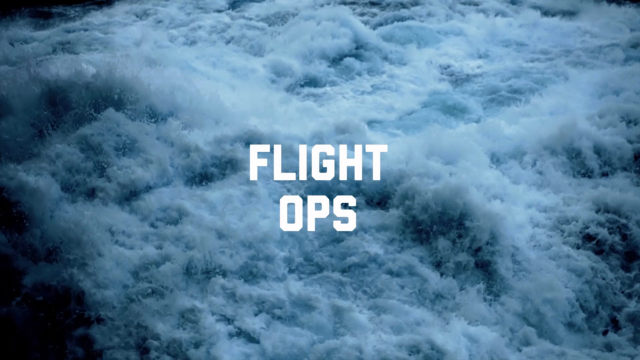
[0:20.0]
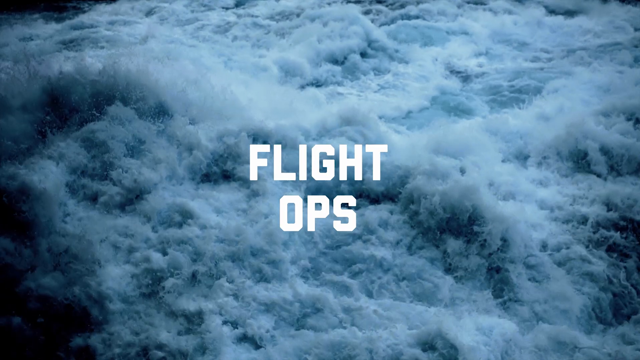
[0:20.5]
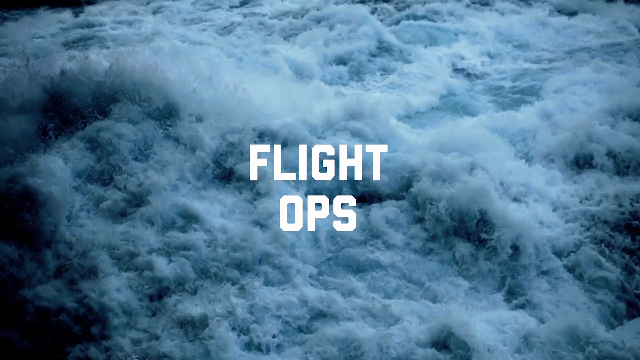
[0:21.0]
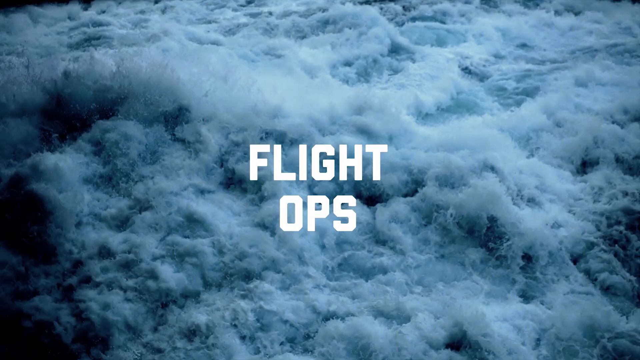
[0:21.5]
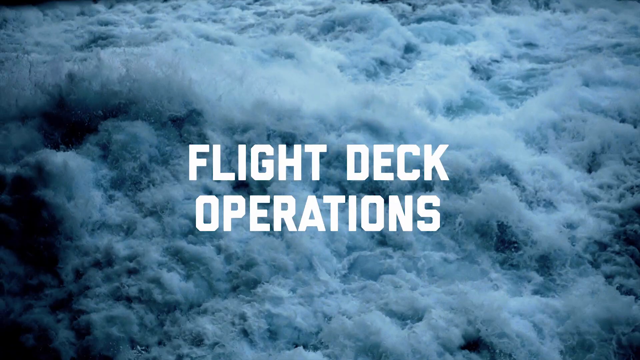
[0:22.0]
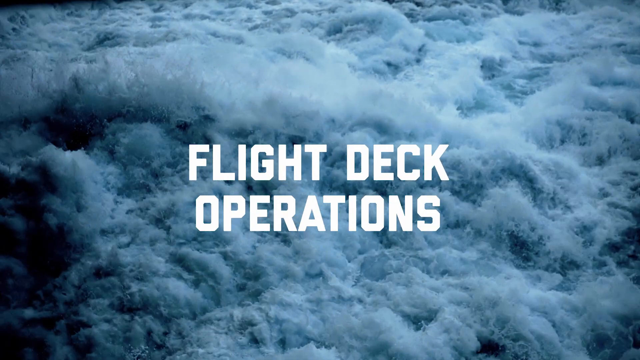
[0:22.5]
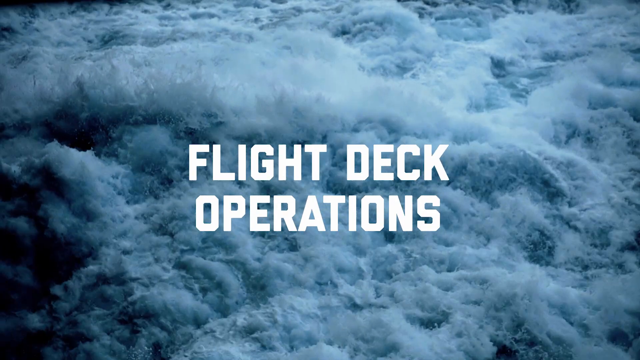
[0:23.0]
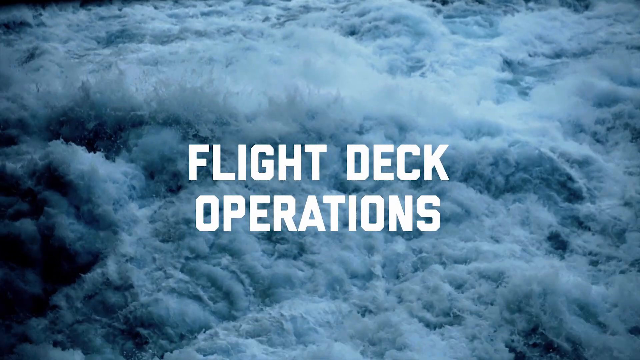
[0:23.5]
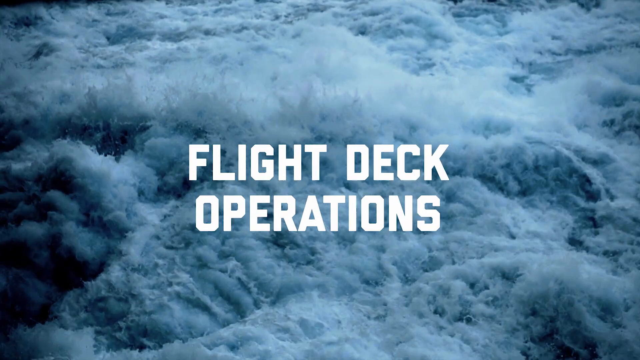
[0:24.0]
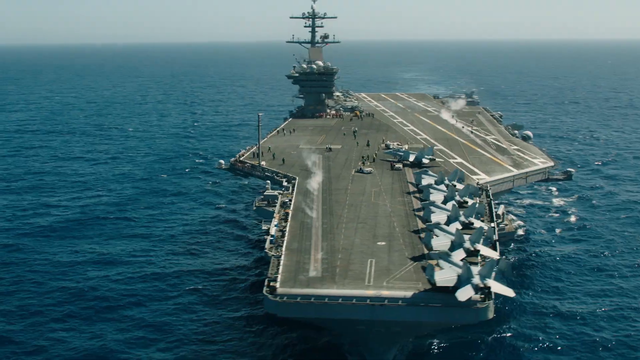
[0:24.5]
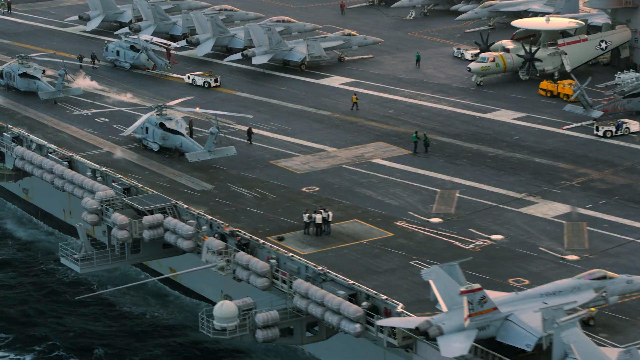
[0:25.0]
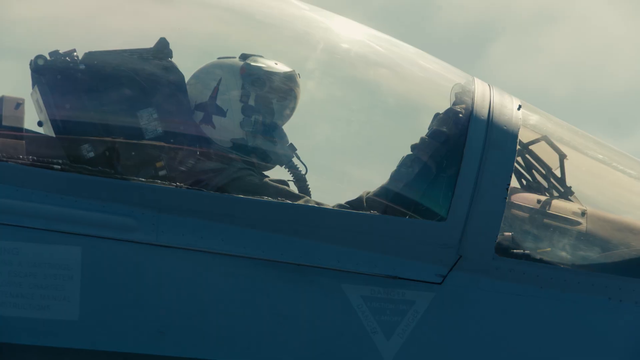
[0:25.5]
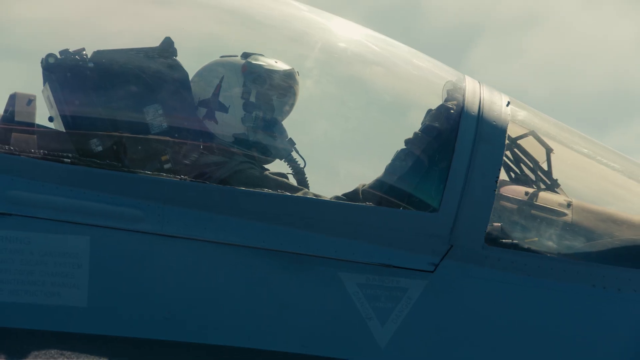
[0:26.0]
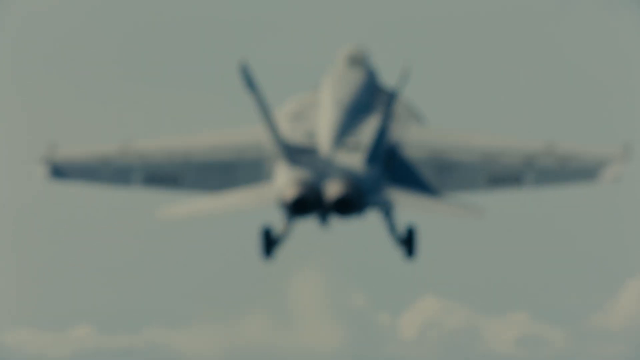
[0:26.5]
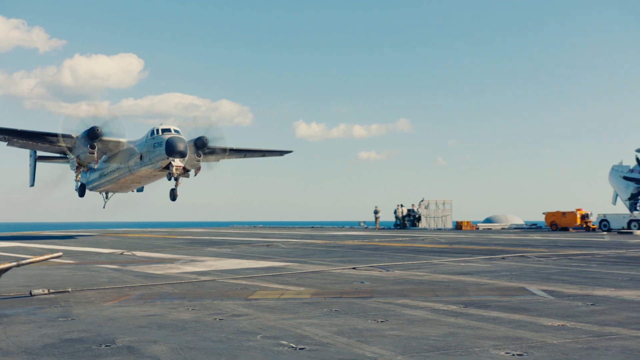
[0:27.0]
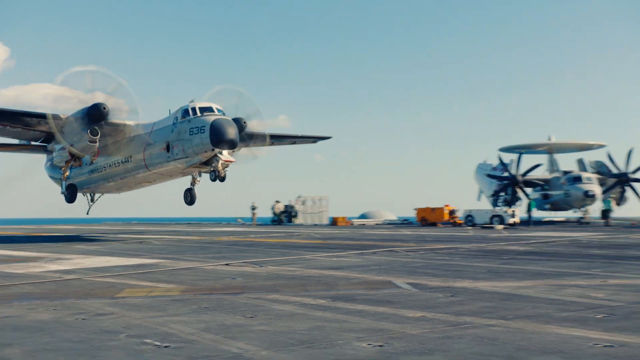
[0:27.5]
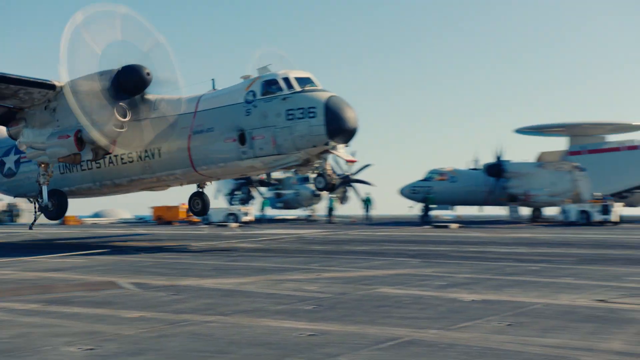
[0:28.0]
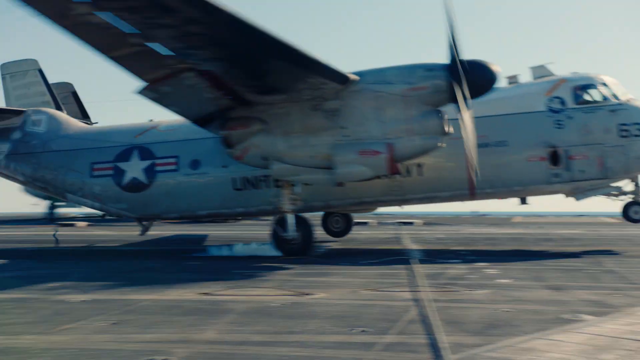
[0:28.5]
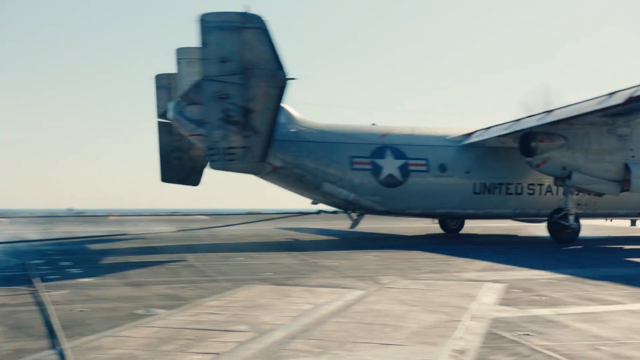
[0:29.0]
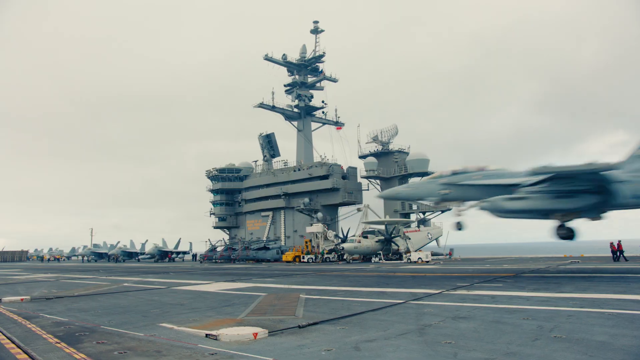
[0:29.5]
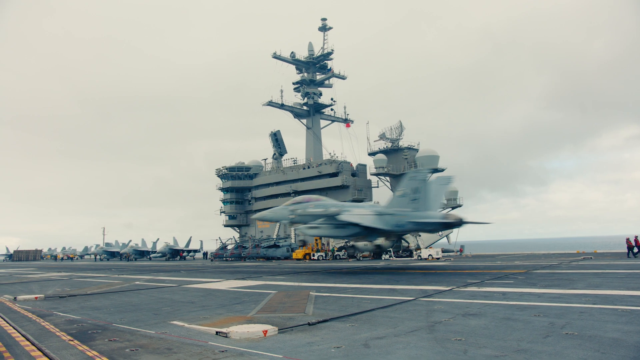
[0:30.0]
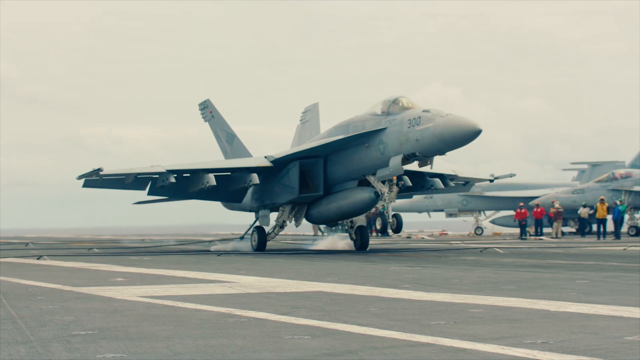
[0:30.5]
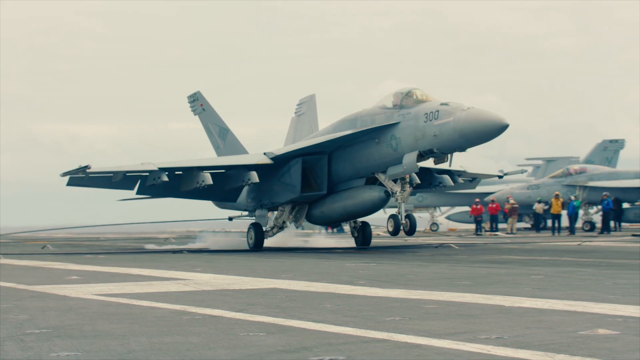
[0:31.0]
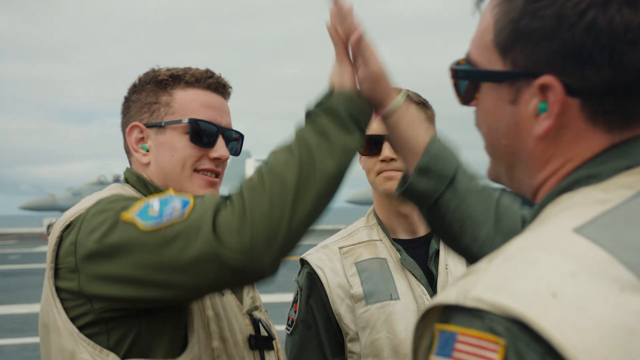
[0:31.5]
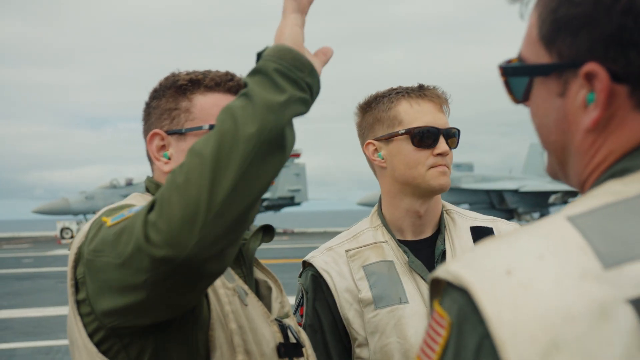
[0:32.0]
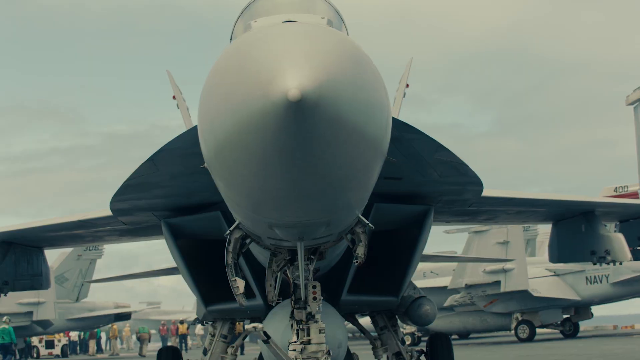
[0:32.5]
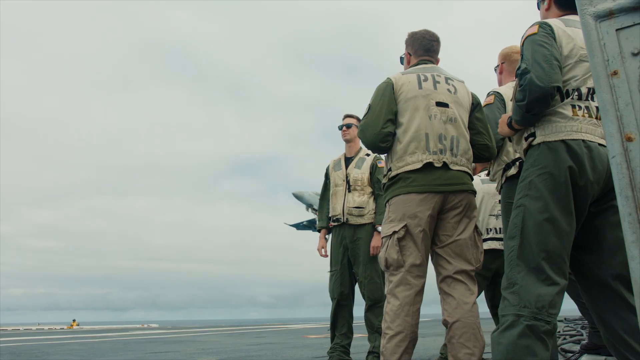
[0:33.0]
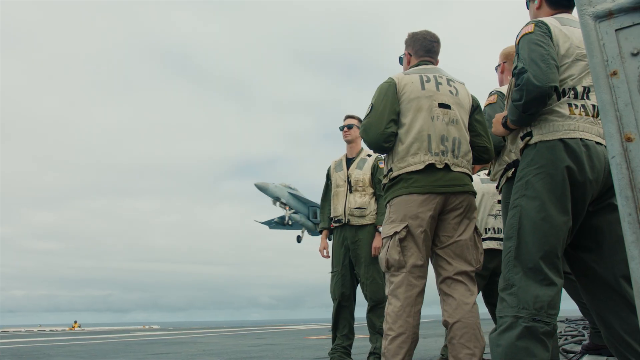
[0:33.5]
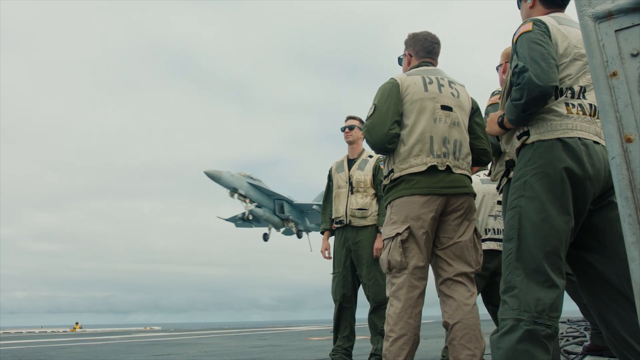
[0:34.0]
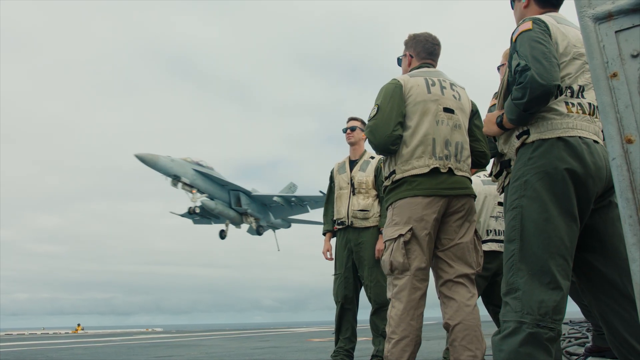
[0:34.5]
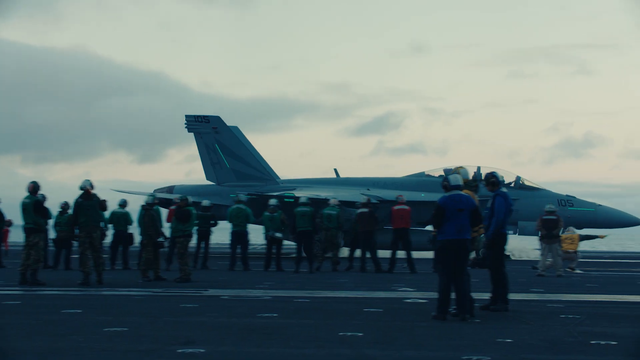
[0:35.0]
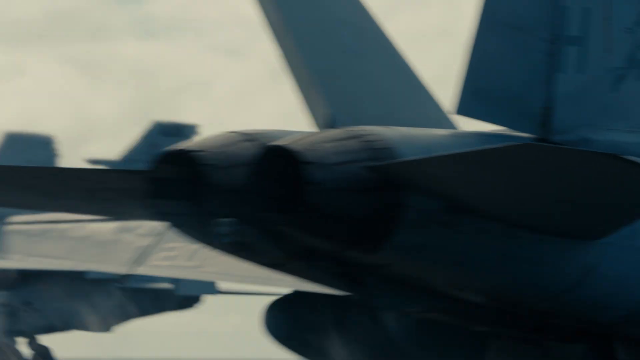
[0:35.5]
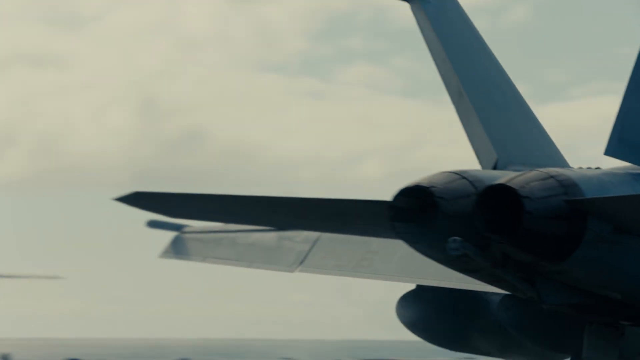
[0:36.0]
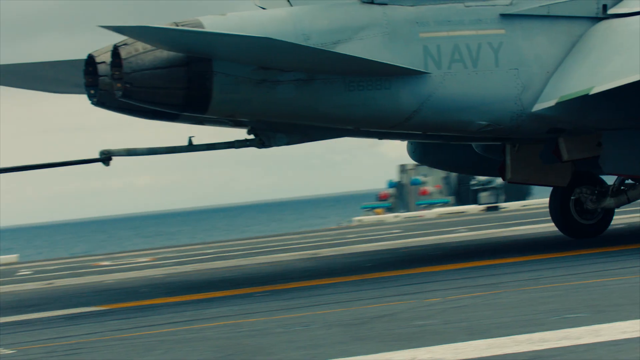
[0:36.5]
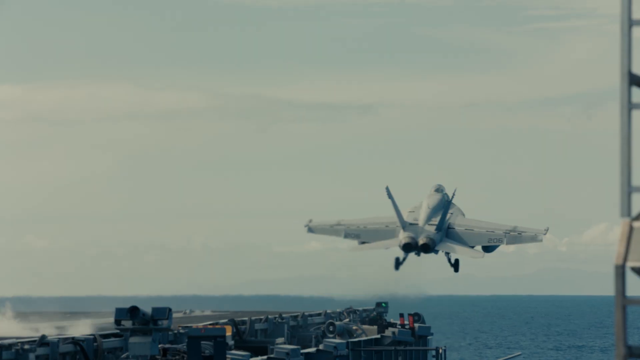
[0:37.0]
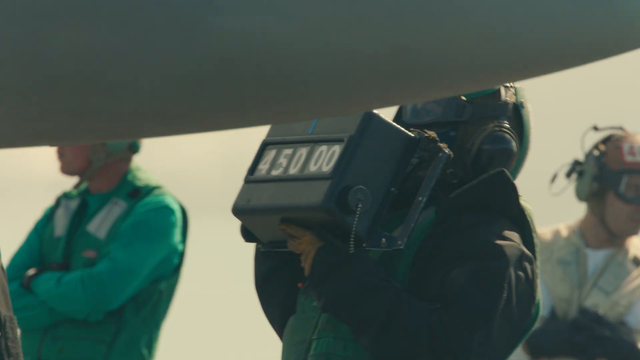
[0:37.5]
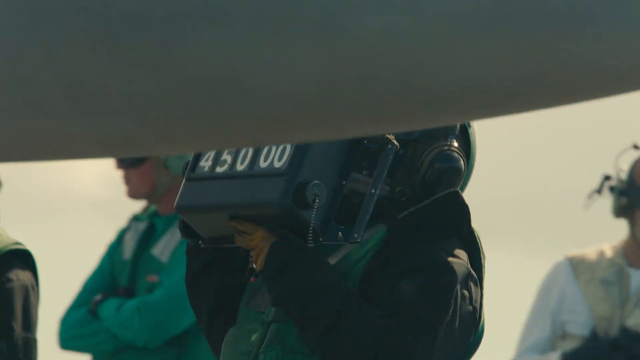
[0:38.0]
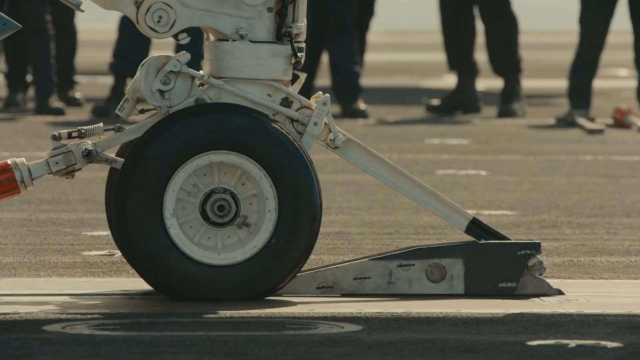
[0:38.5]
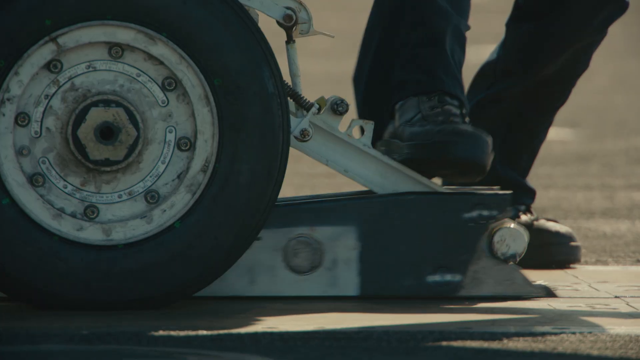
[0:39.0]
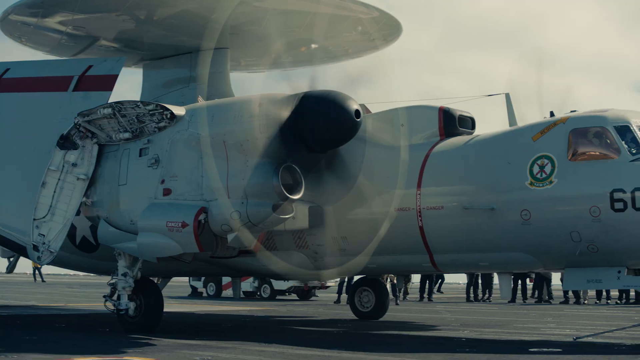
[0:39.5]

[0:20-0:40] The text stops flashing, and "flight ops" appears in white text in the very center of the screen, with very active, crashing blue water with white foam behind it. The text changes to "flight deck operations" and flashes a couple of times before the video returns to the deck of the ship with all the planes on it. Quick shots follow: planes moving down the lanes on the deck, a close-up of a pilot in profile inside a plane, a plane taking off in a kind of blurry way, a plane landing on the deck, and several more rapid-fire shots of planes taking off or landing. A close-up shows three men, all wearing sunglasses and kind of beige vests with olive shirts underneath, high-fiving. After a couple of very quick shots of the fronts of planes, the same men in uniform appear again, now four or five of them standing in a group on the right side of the screen while a plane starts to land behind them. The view zooms in on a plane and goes through several videos of planes taxiing on the deck, then quick videos of people in the crew, a close-up of a plane's wheel, and finally a close-up of a propeller spinning.